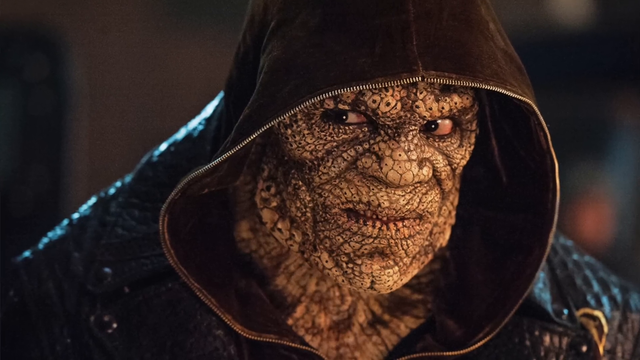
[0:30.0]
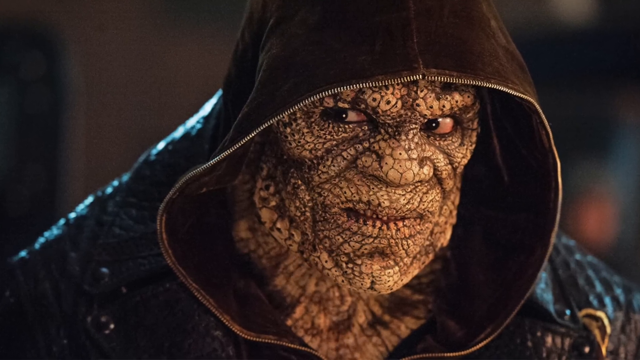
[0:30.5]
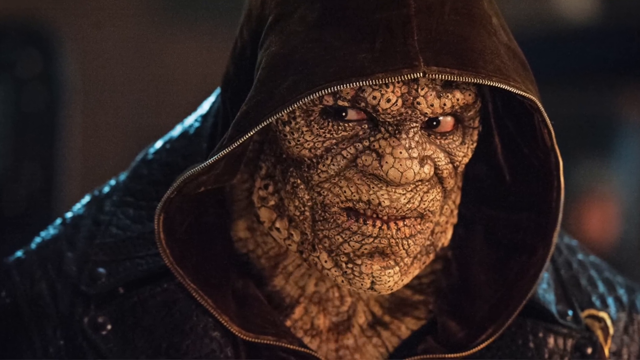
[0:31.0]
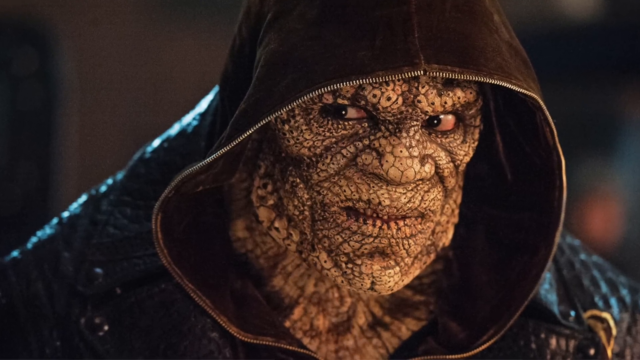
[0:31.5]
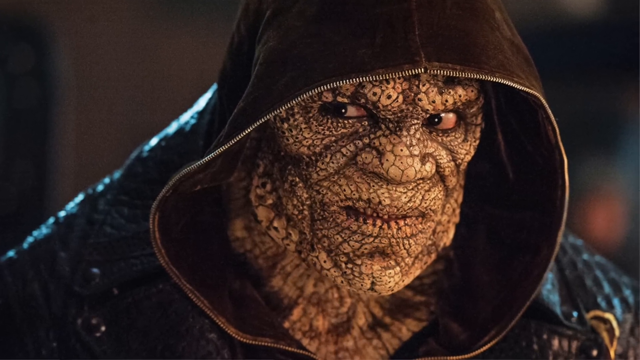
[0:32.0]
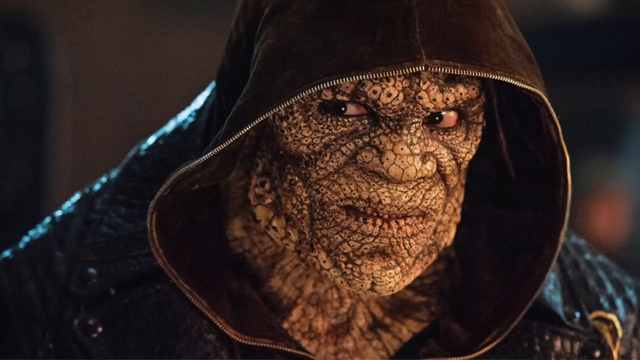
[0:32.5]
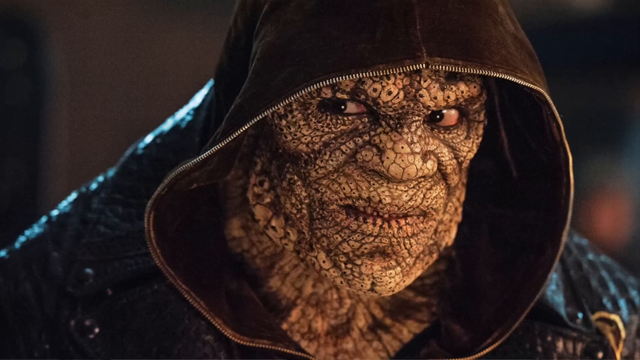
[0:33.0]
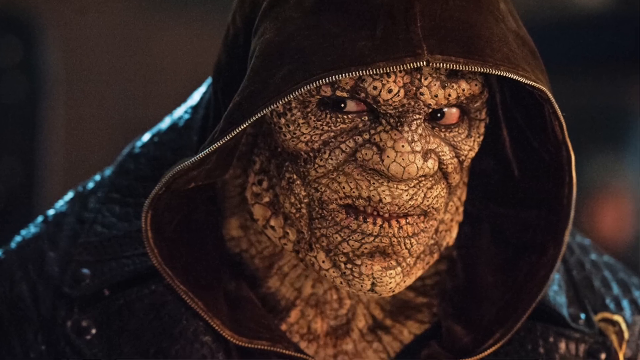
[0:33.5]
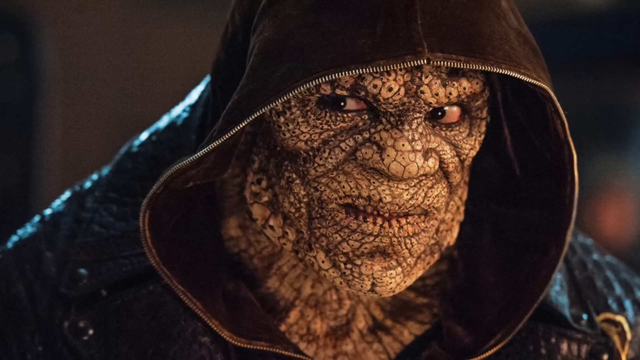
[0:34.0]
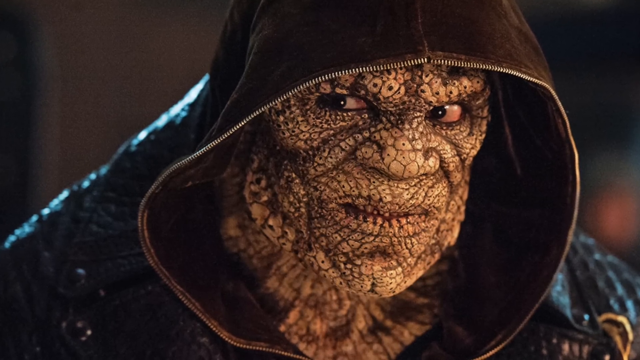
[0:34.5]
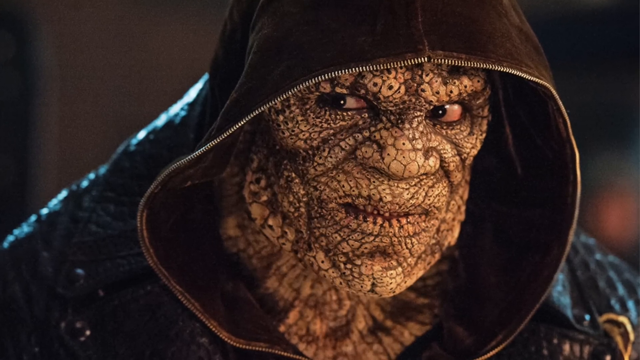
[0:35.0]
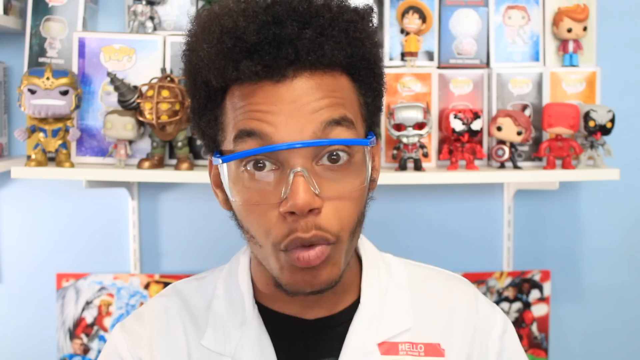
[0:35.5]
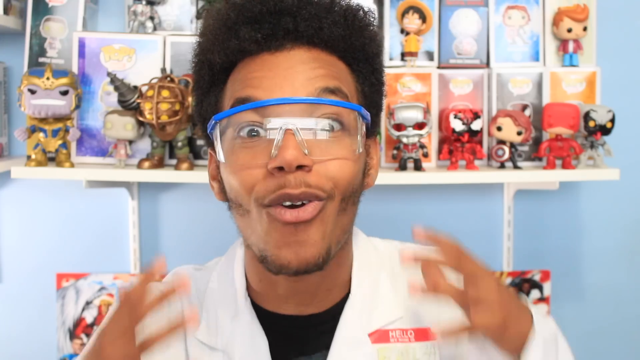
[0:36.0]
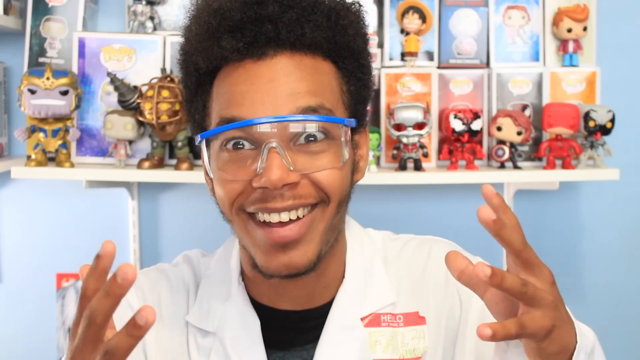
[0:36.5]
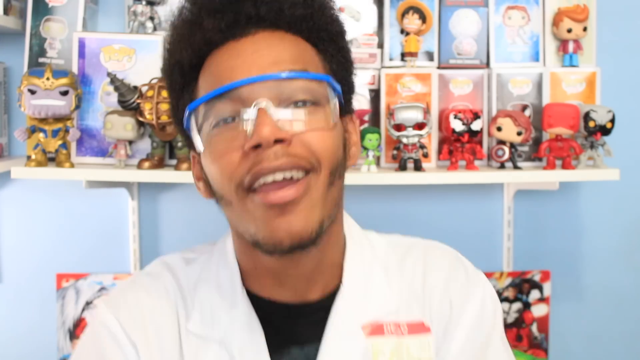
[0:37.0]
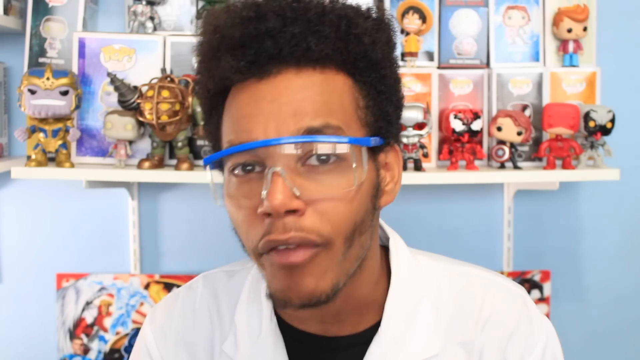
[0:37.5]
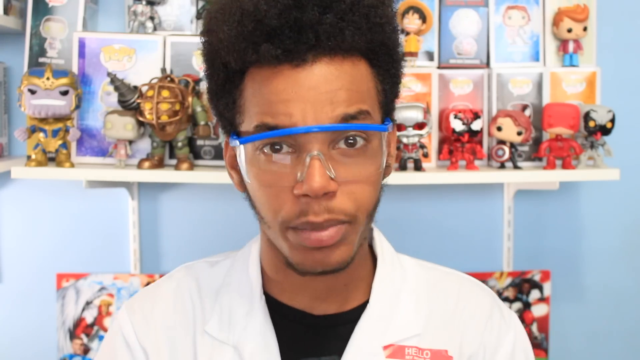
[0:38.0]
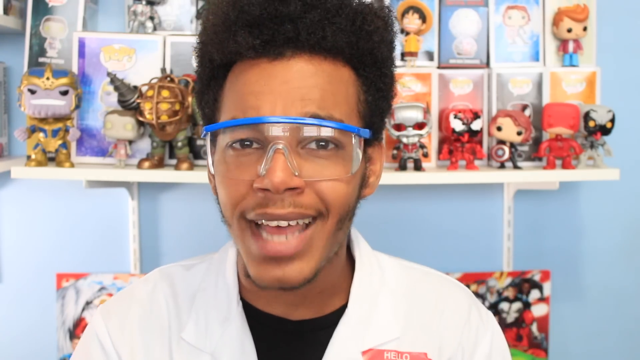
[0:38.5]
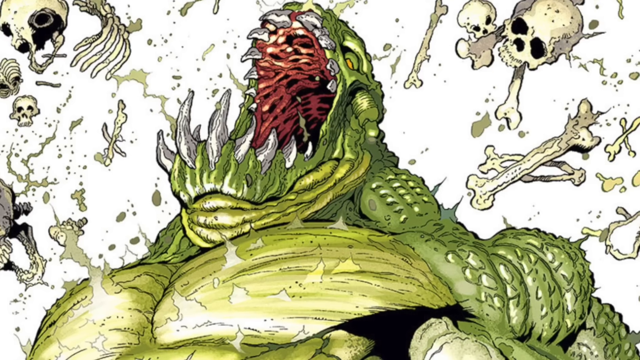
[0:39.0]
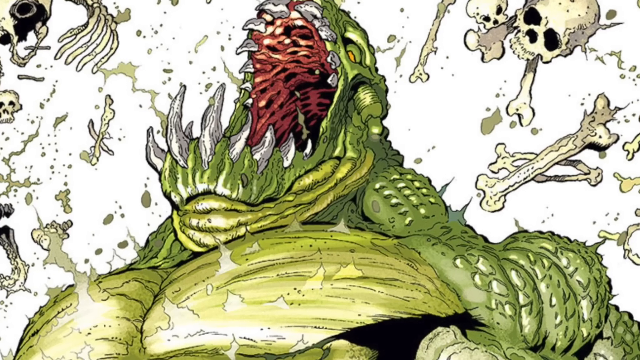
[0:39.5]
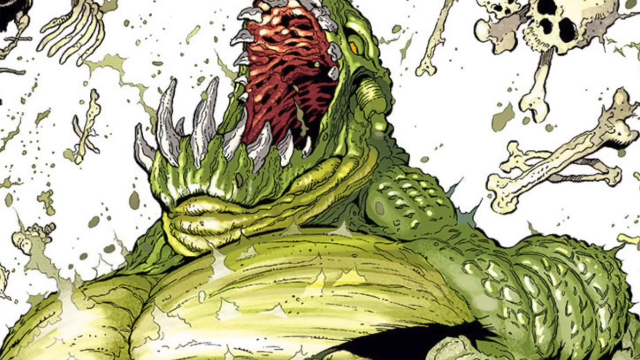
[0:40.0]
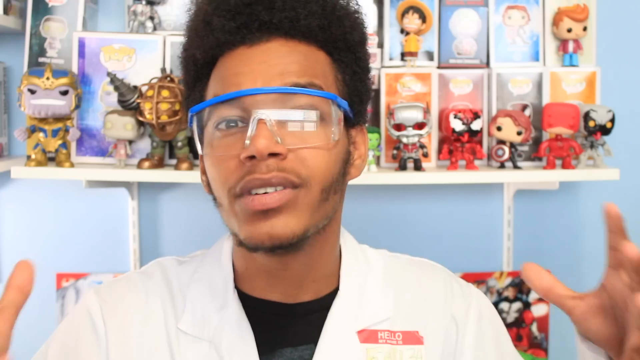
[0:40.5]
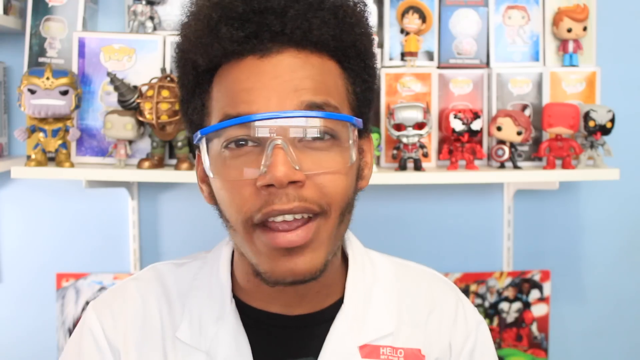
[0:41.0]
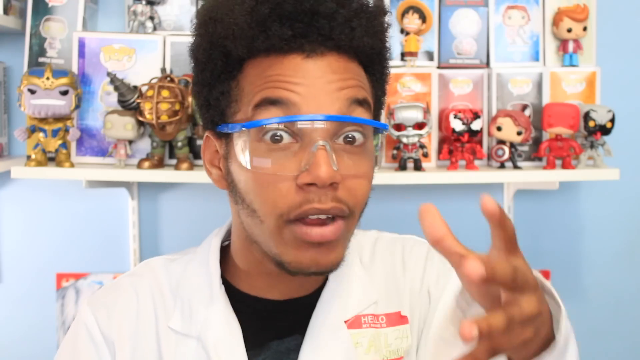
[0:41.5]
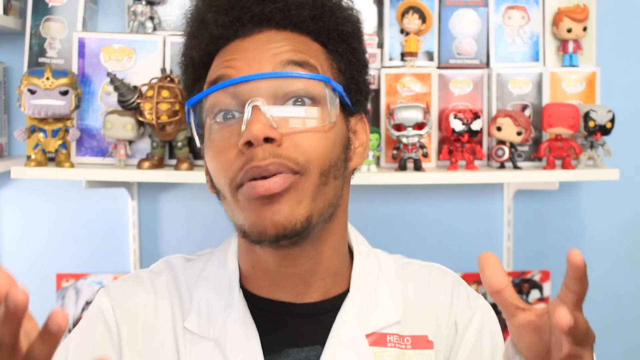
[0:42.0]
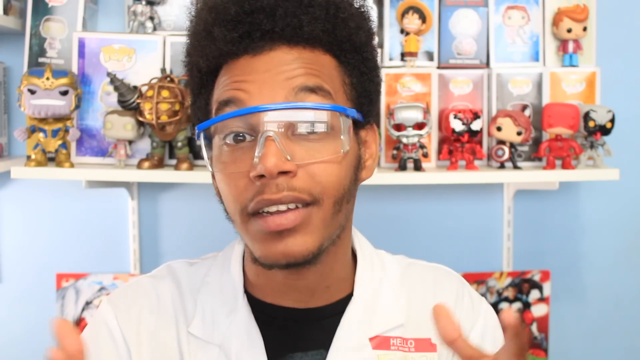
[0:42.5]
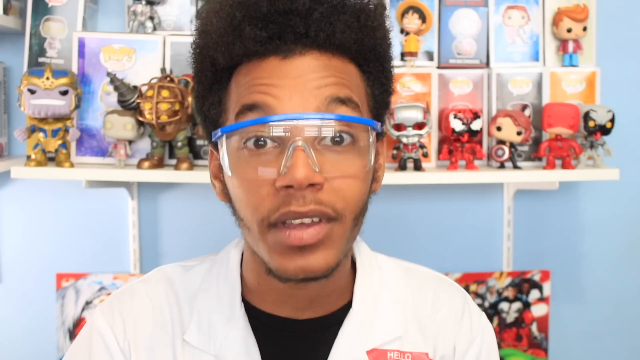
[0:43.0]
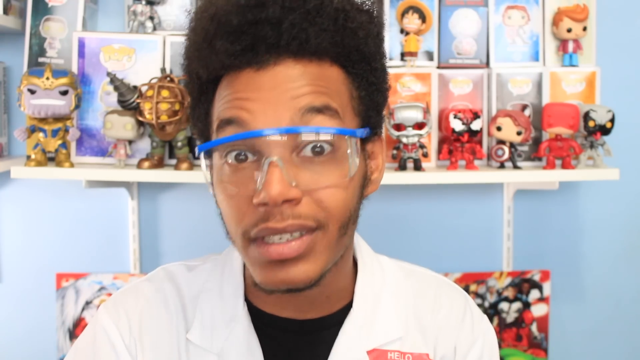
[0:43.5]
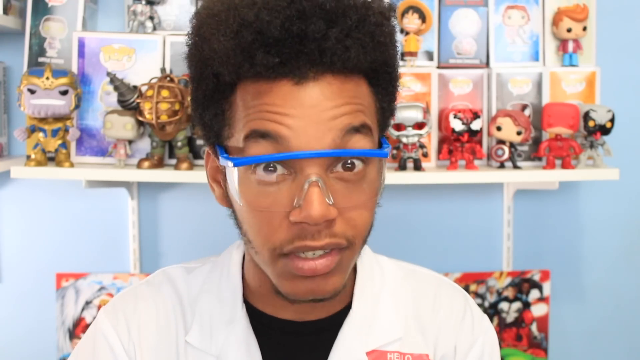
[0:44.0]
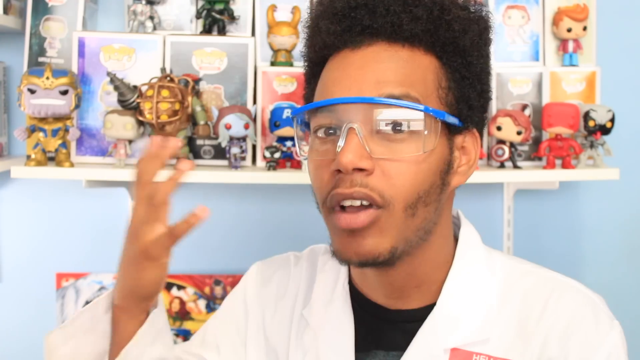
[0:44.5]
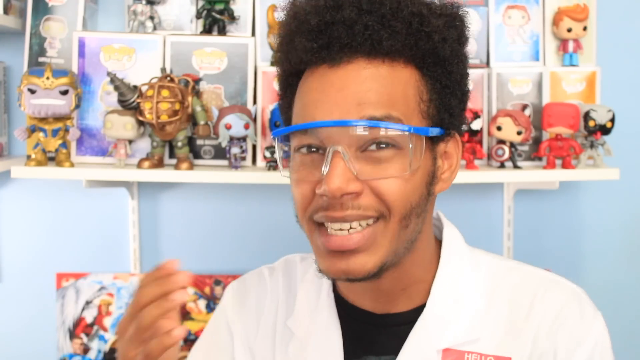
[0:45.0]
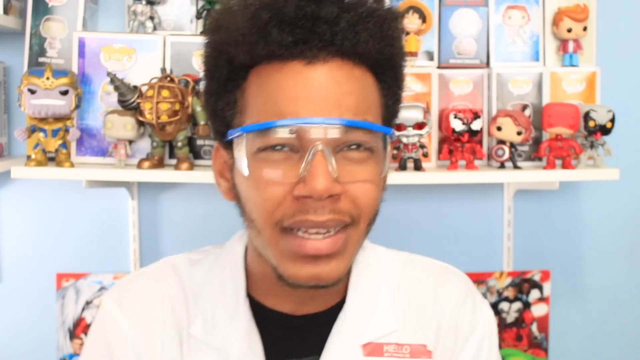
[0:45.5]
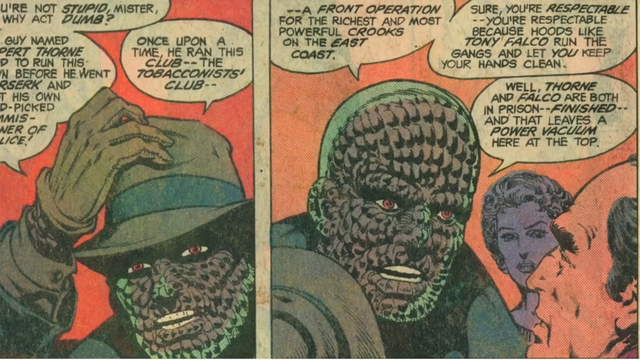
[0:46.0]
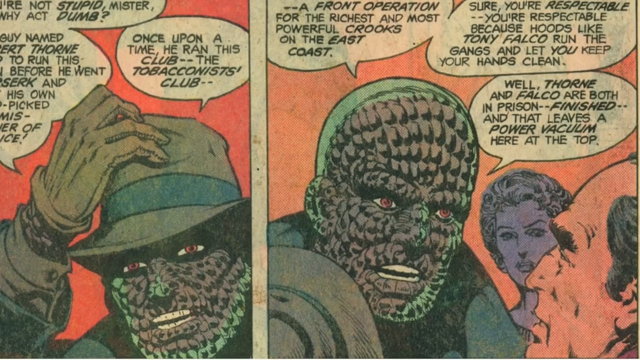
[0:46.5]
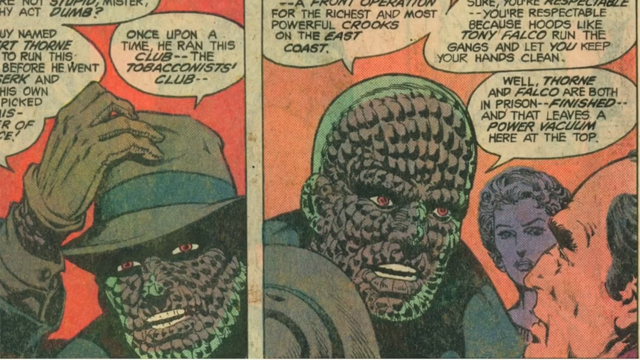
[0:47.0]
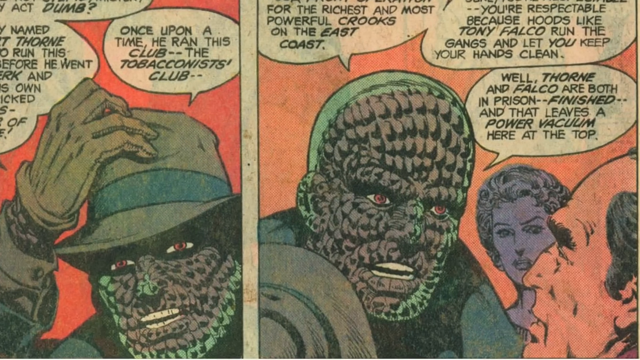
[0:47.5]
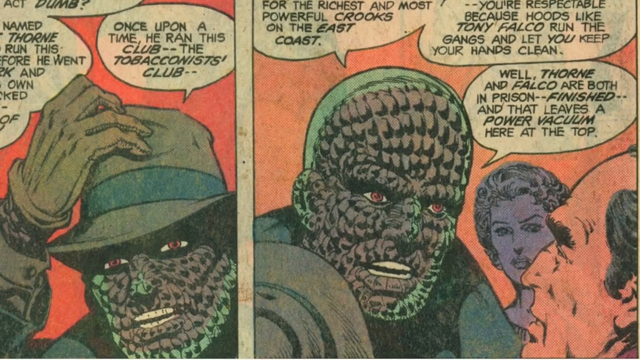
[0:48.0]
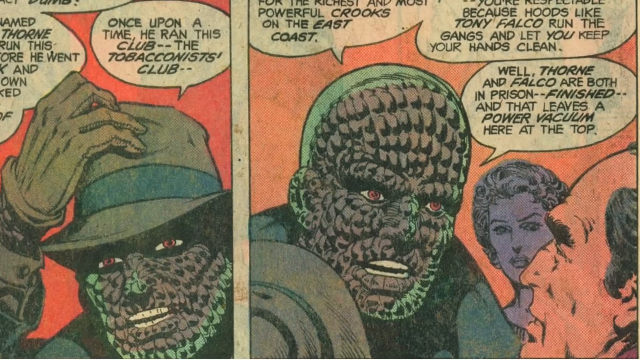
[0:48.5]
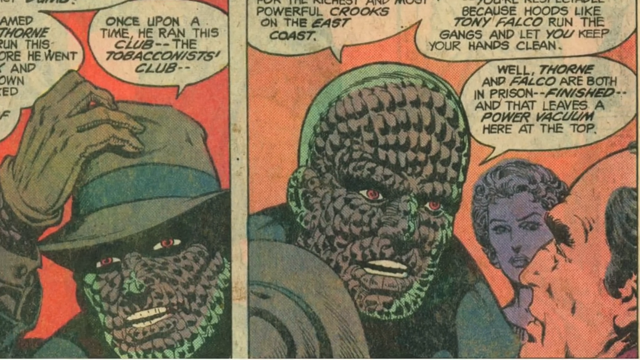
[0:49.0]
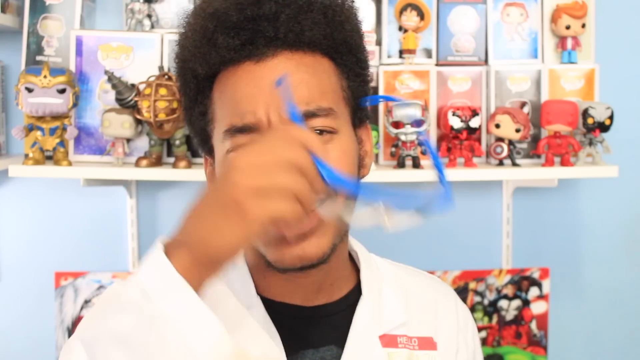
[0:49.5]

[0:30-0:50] What looks like a monster with a scary face, wearing a black hooded jacket, is shown; the picture zooms in and it faces the camera. Next comes a green frog with its mouth wide open, followed by various pictures and cartoons with words written on them. The man talks and, judging from his facial expression, seems super excited. He has afro hair and wears a white jacket with a red logo inside it over a black t-shirt. He then removes the glasses he is wearing, and the video returns to the monster-looking creature. The background behind the monster is blurred, its eyes appear red, and it wears what appears to be a serious grin.